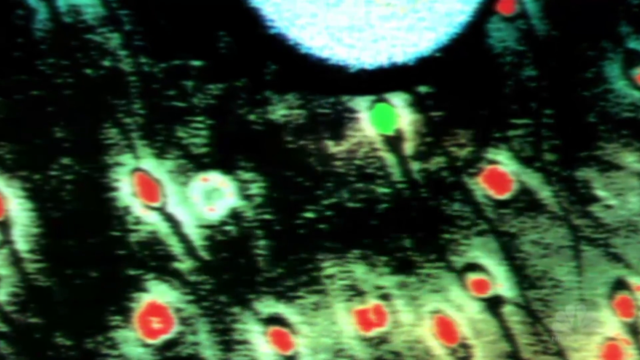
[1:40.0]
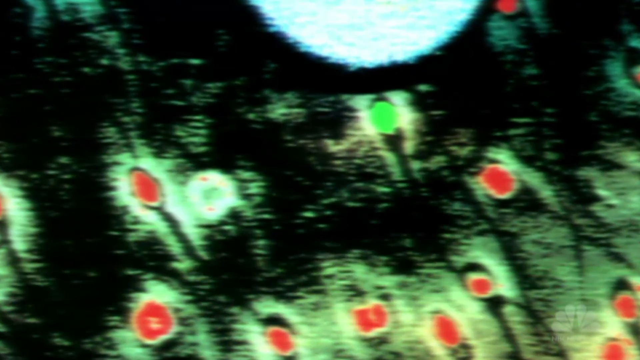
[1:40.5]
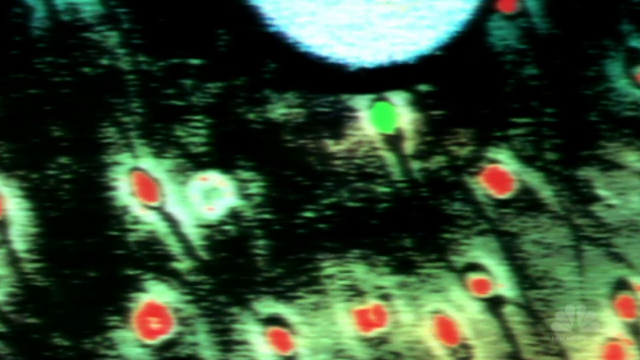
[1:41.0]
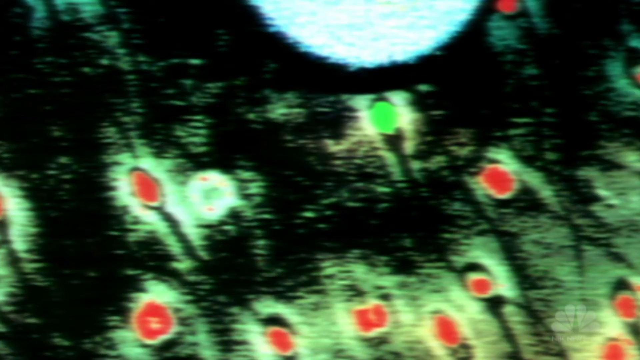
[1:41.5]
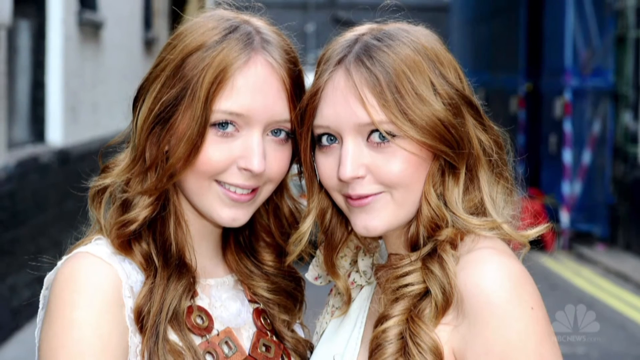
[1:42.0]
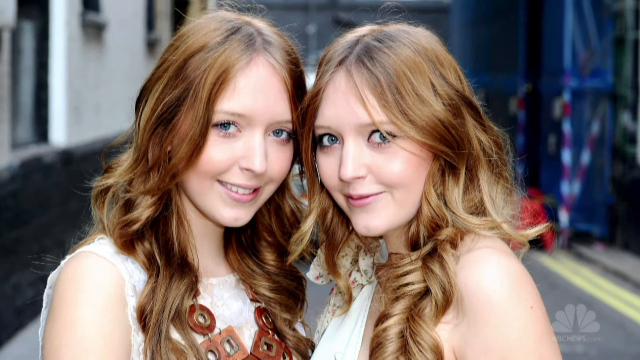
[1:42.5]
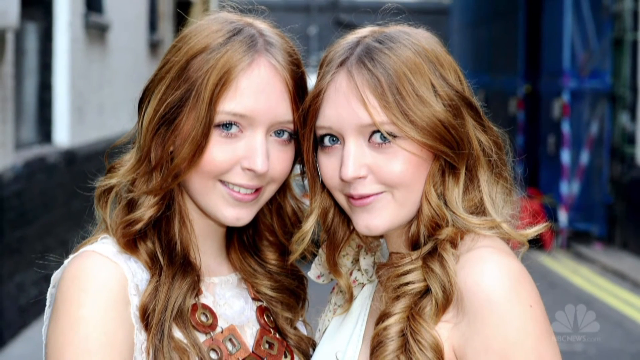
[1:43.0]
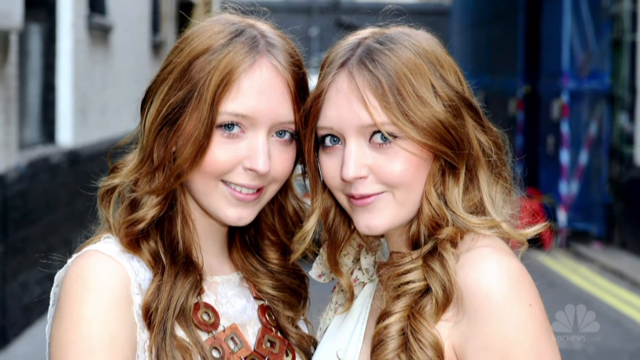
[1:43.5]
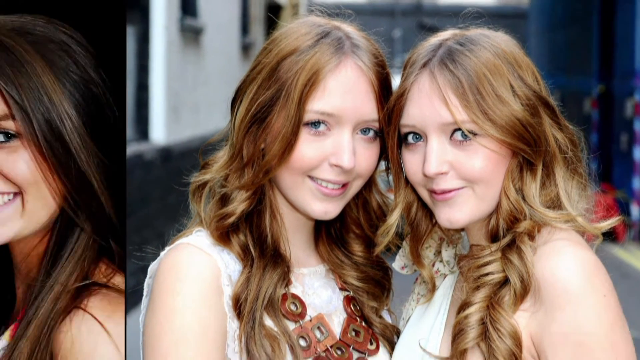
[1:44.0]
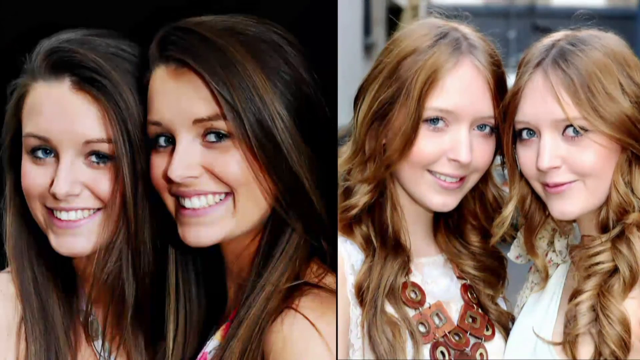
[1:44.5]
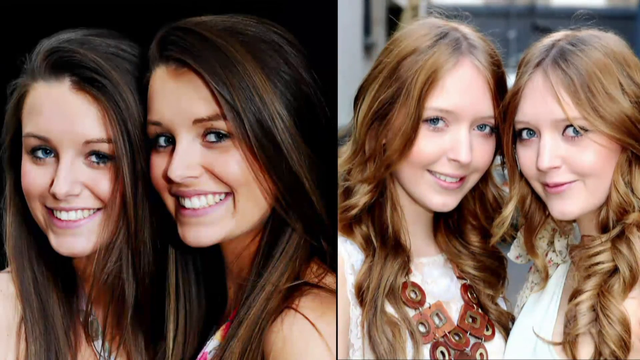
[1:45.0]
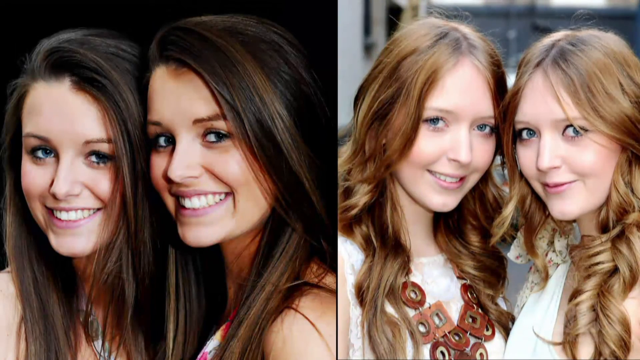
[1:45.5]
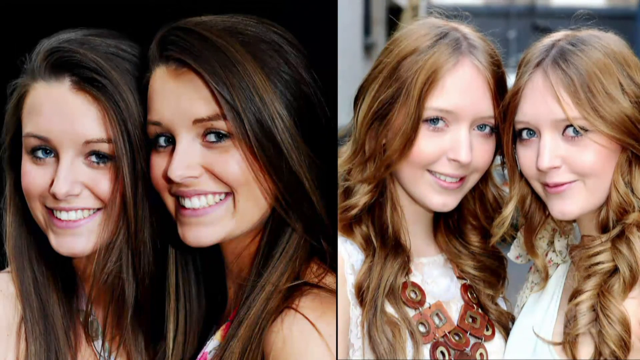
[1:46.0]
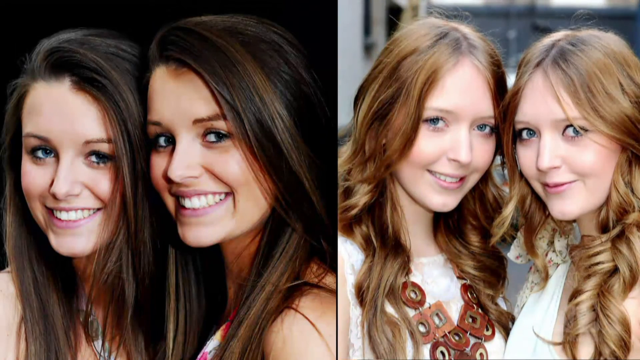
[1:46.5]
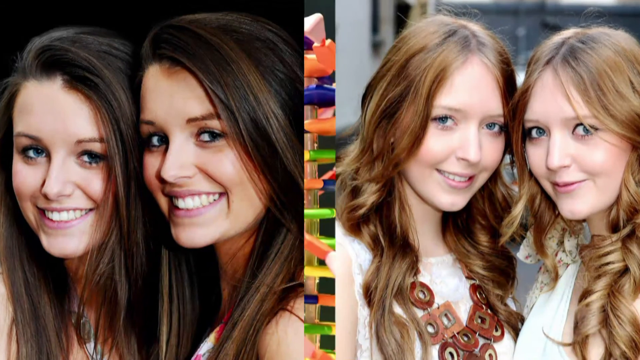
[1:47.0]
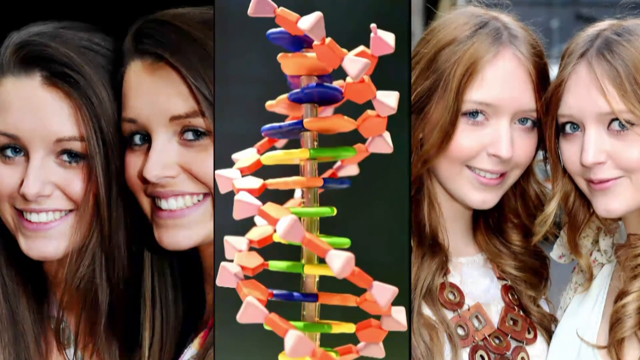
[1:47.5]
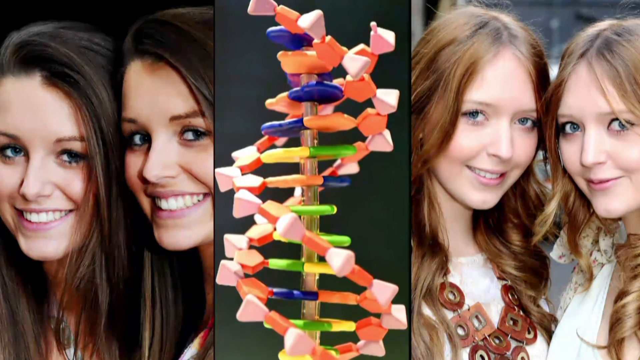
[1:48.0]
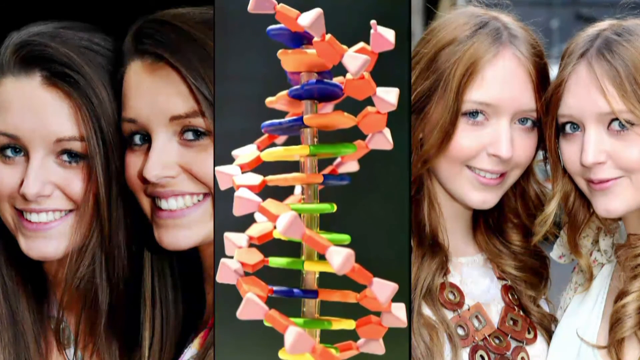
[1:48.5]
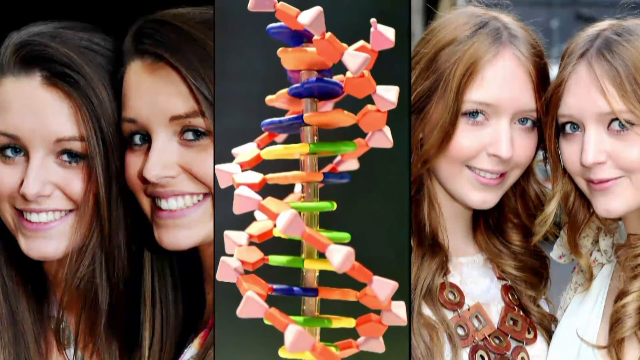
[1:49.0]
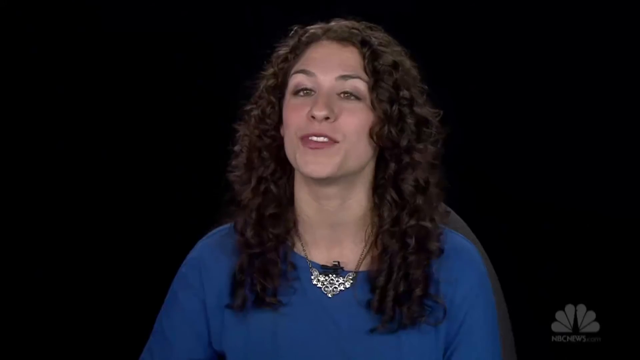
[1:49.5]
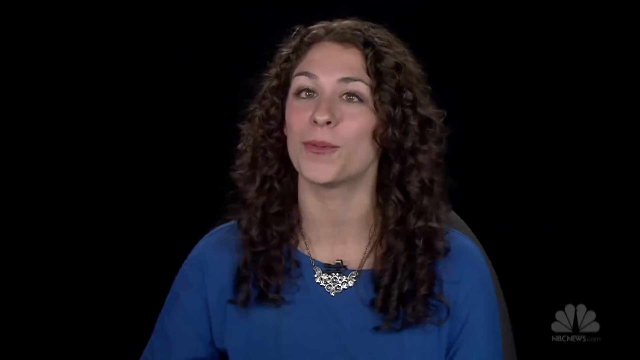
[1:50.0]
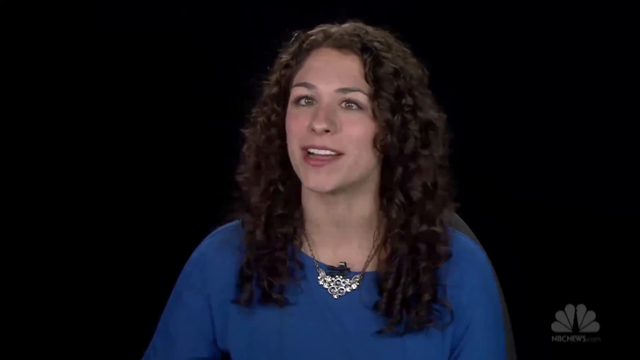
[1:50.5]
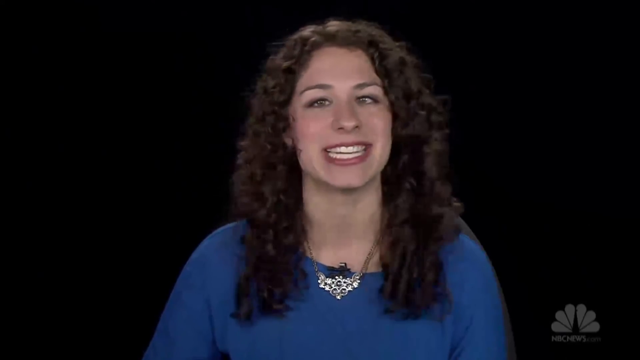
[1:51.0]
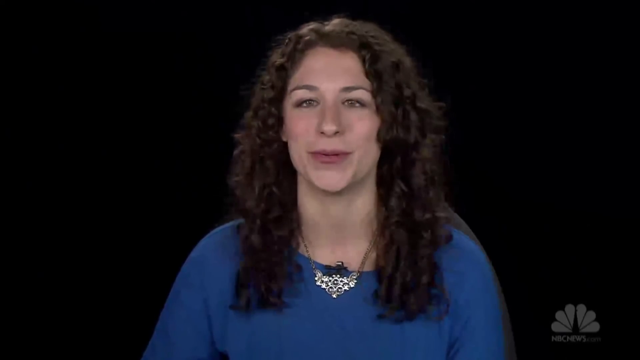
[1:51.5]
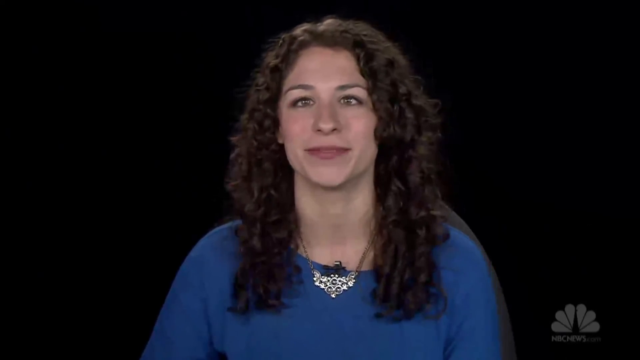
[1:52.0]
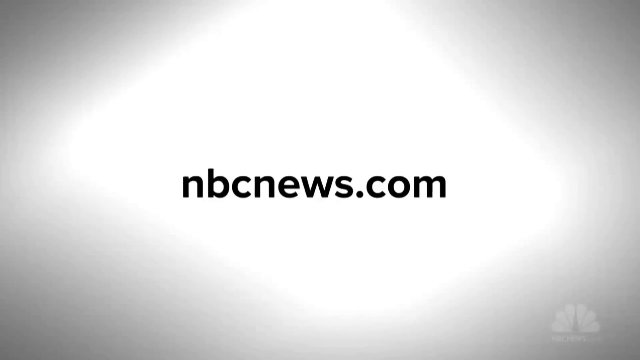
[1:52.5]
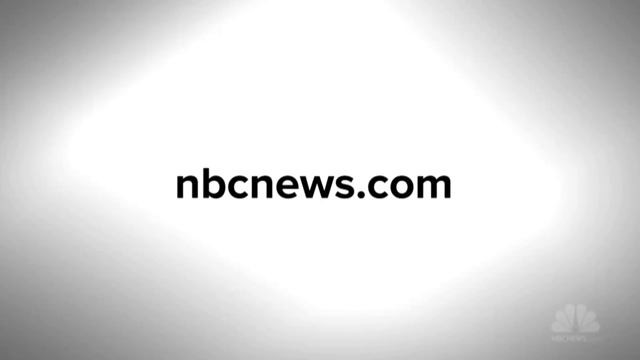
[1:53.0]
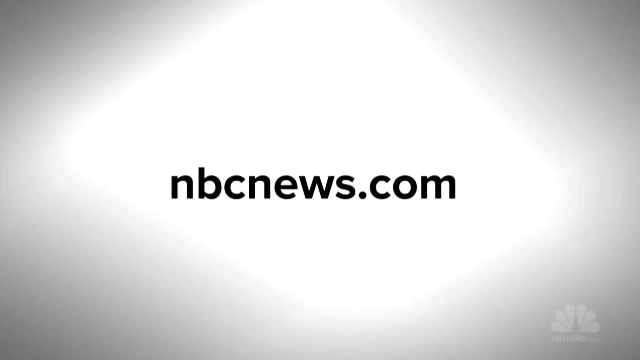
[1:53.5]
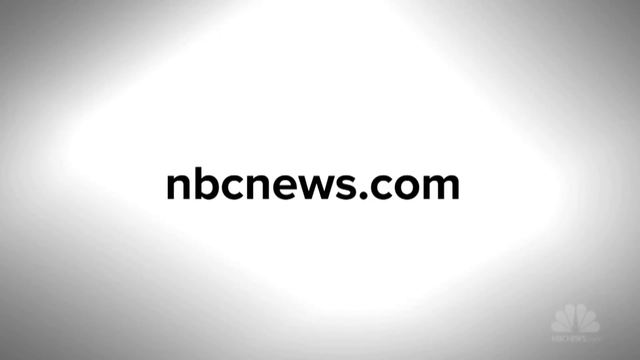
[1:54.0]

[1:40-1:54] A picture shows two girls staring right into the camera. The one on the left has long reddish brown hair and wears a white sleeveless shirt. The one on the right looks just like her, so they are twins; she also has long reddish brown hair, wears a sleeveless shirt and looks at the camera. Their heads are touching and facing forward. In the background is a room with a blue and white wall. The picture then slides to the right, revealing another picture of twins, seen from the shoulders up, with long dark brown hair, smiling for the camera. The two pictures then split apart, and in the middle appears a third picture showing a strand of DNA mixed with many colors: blue, yellow, green, pink and red.